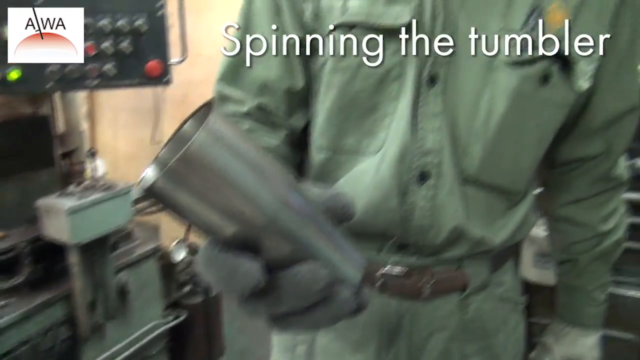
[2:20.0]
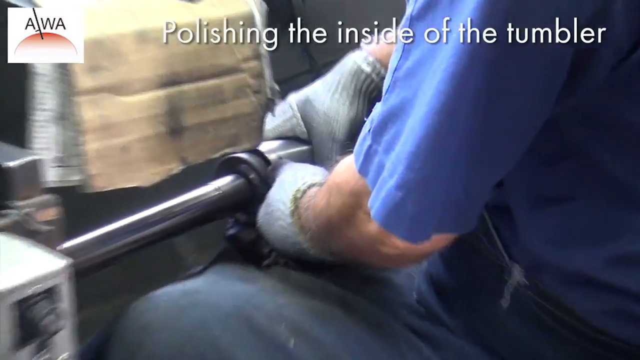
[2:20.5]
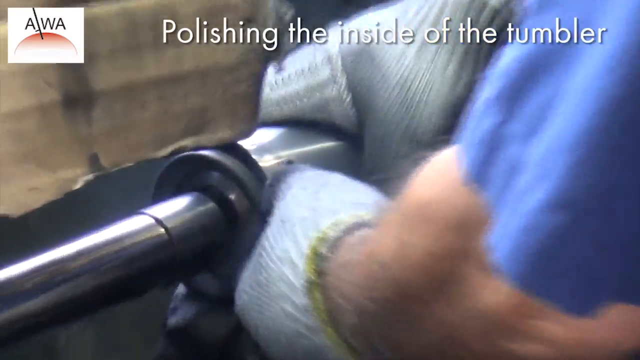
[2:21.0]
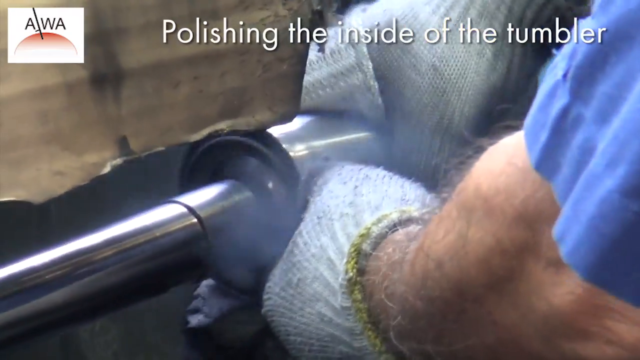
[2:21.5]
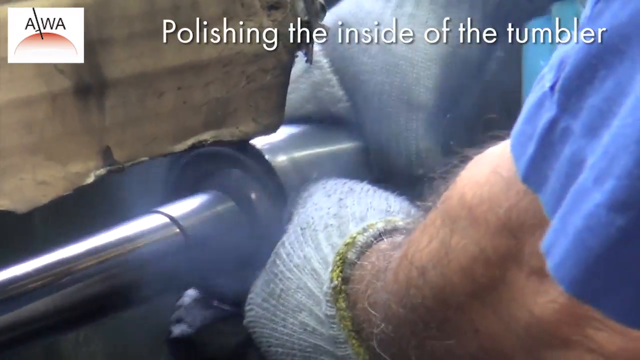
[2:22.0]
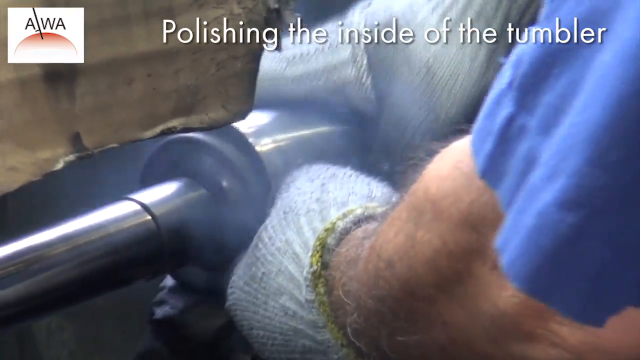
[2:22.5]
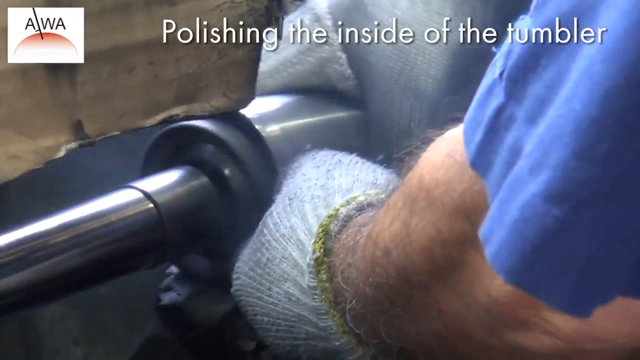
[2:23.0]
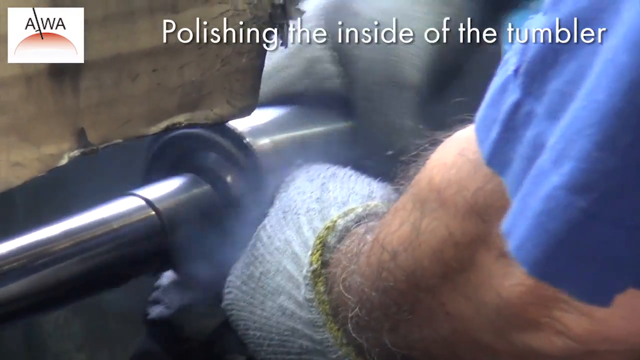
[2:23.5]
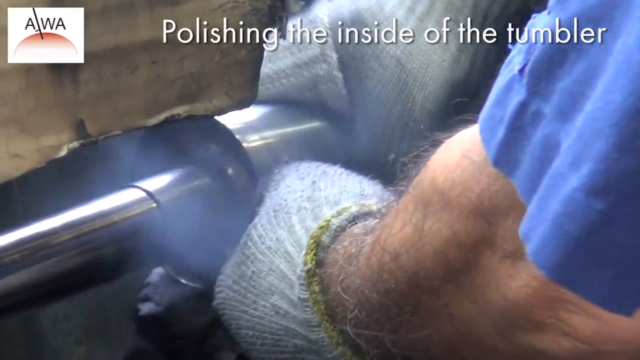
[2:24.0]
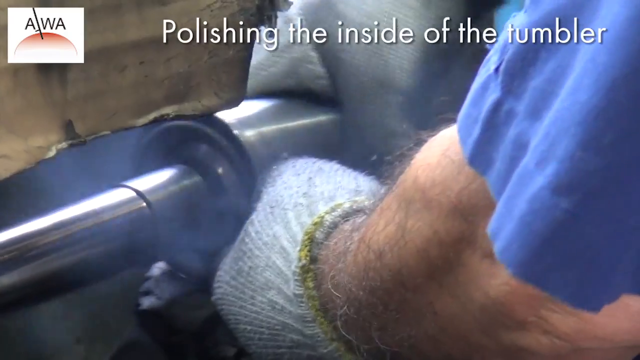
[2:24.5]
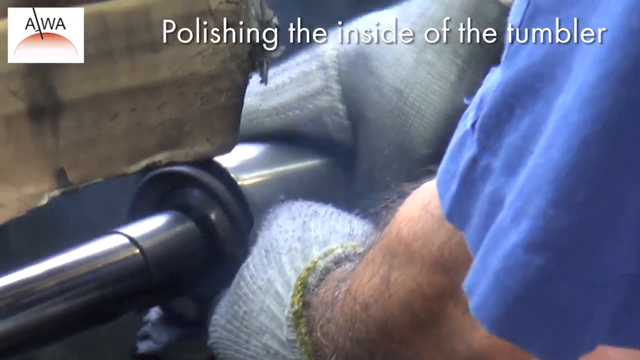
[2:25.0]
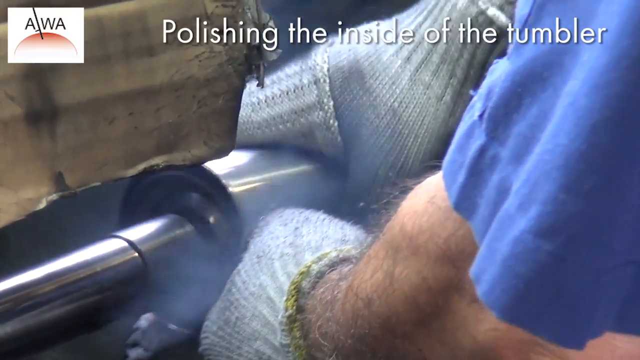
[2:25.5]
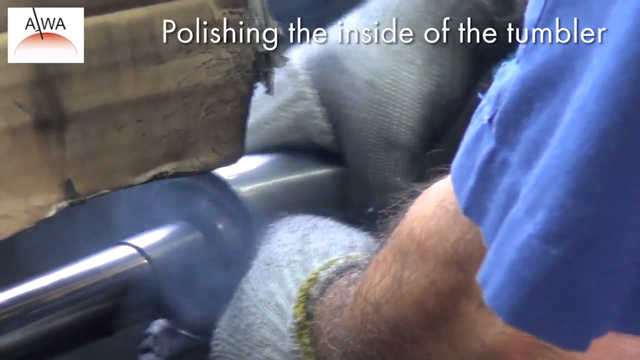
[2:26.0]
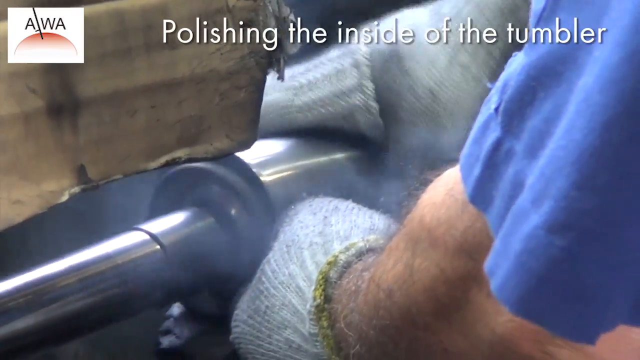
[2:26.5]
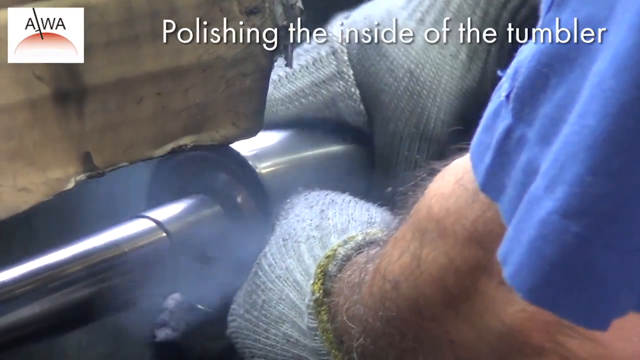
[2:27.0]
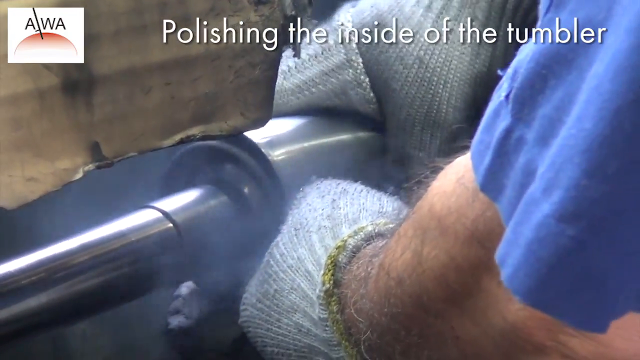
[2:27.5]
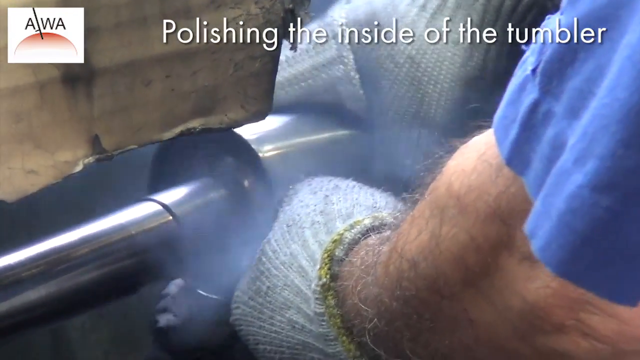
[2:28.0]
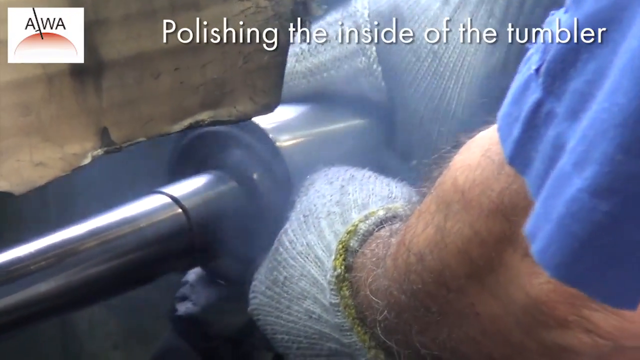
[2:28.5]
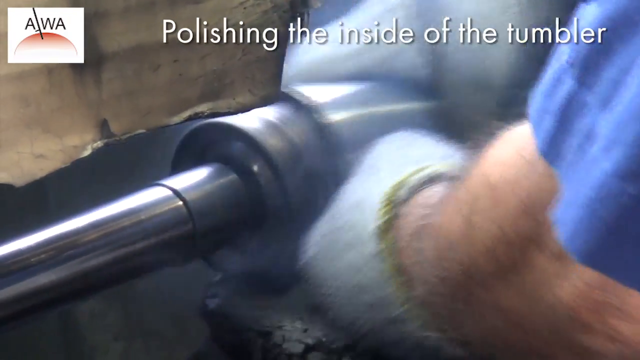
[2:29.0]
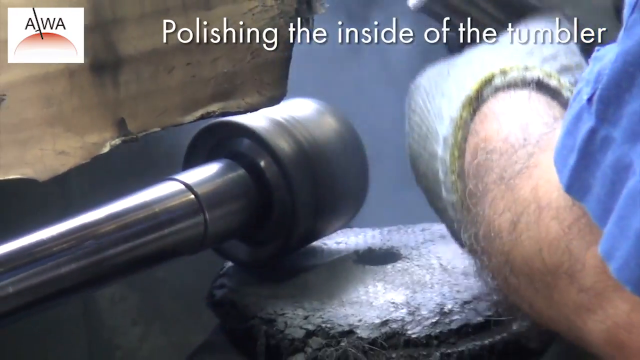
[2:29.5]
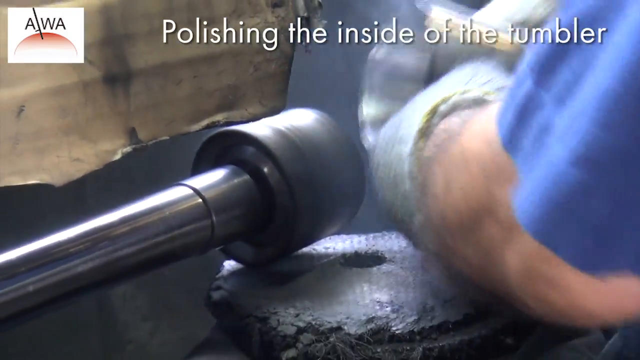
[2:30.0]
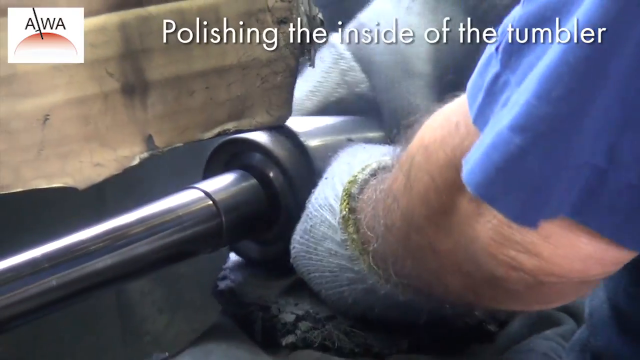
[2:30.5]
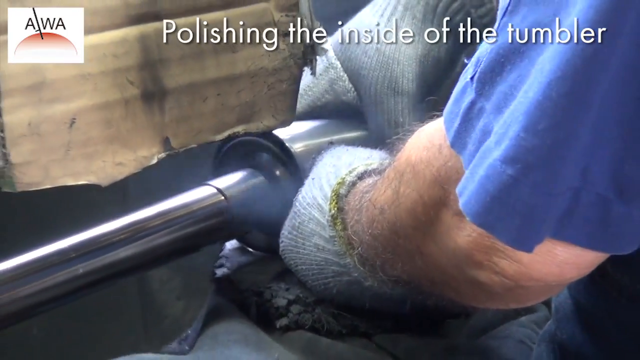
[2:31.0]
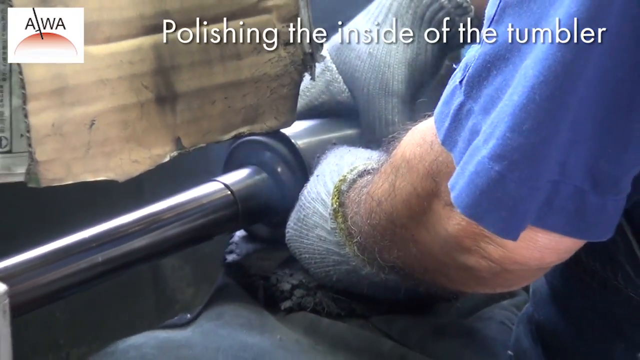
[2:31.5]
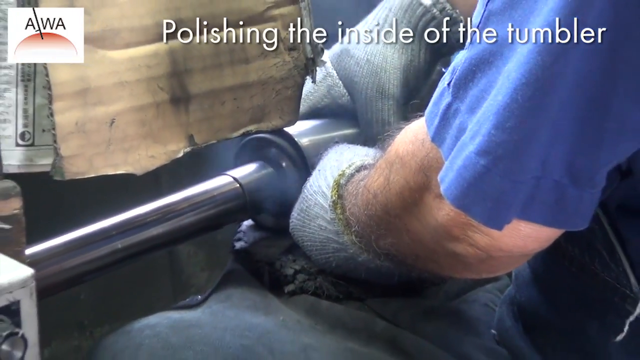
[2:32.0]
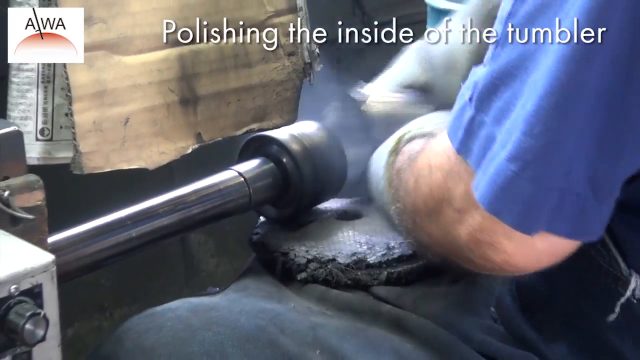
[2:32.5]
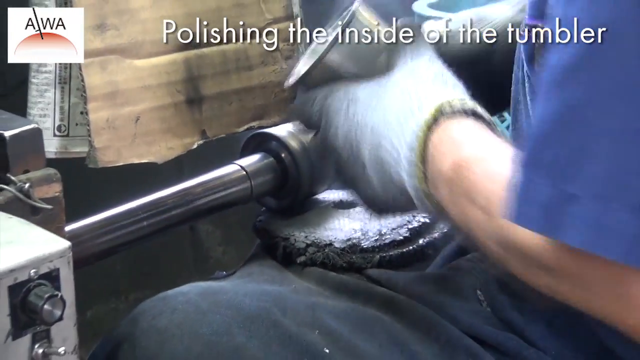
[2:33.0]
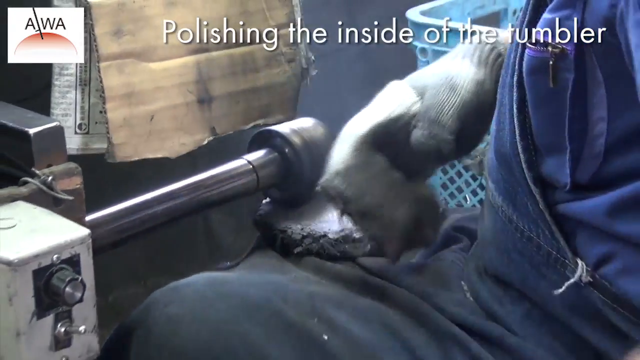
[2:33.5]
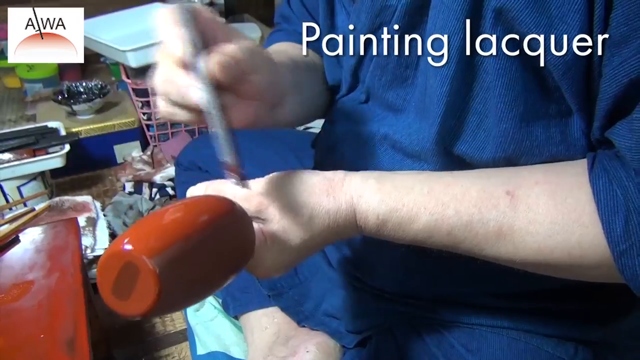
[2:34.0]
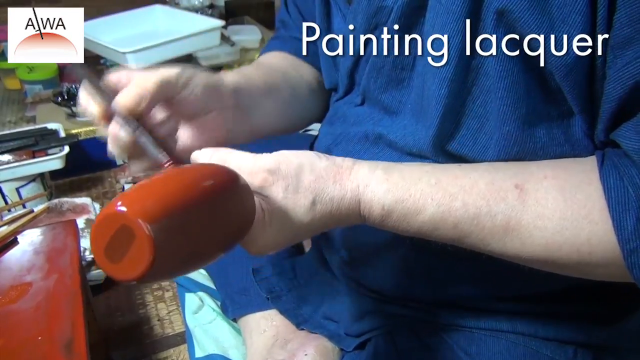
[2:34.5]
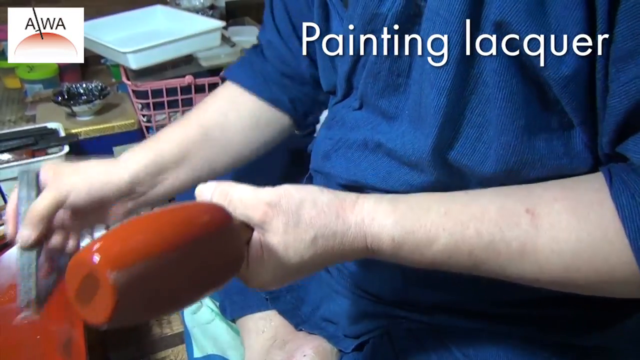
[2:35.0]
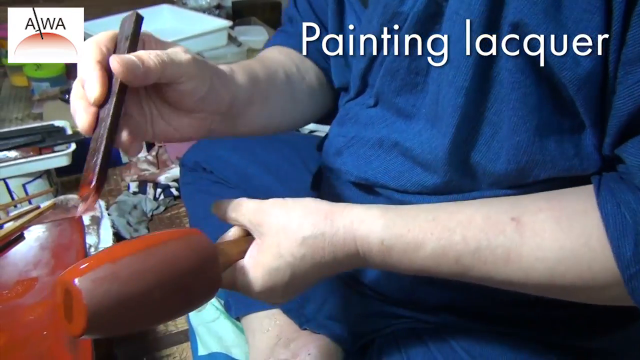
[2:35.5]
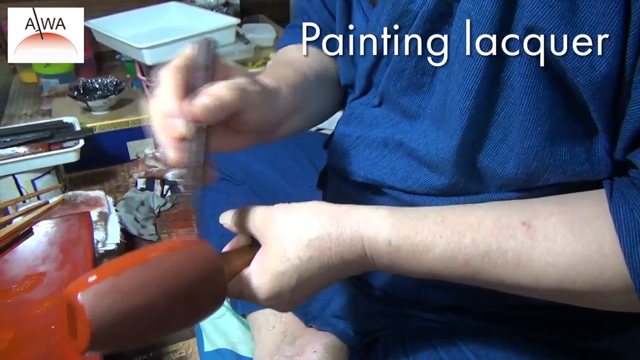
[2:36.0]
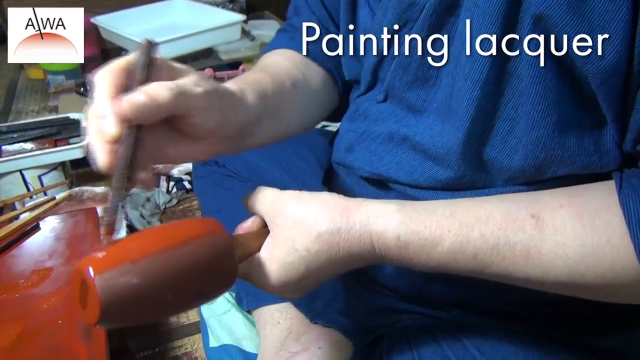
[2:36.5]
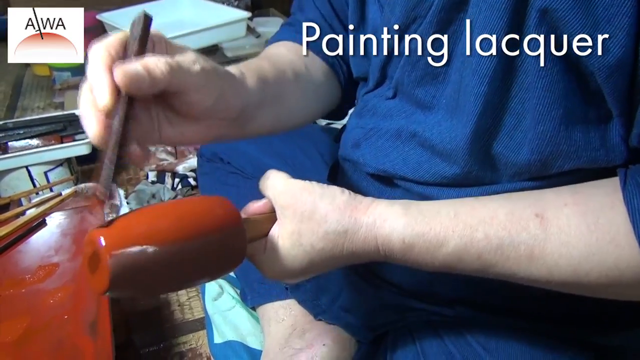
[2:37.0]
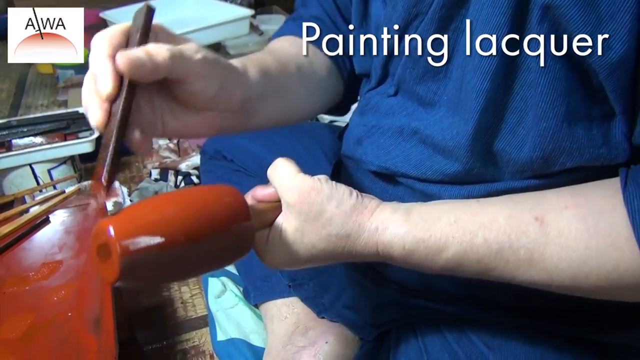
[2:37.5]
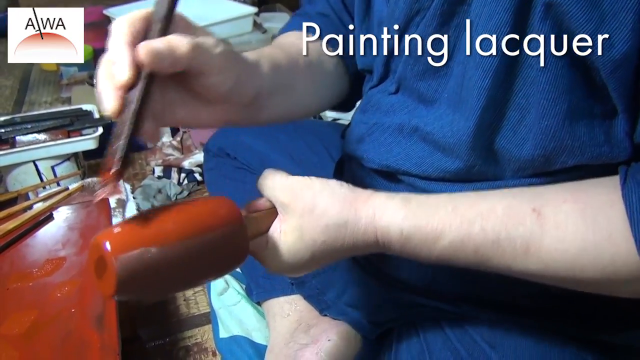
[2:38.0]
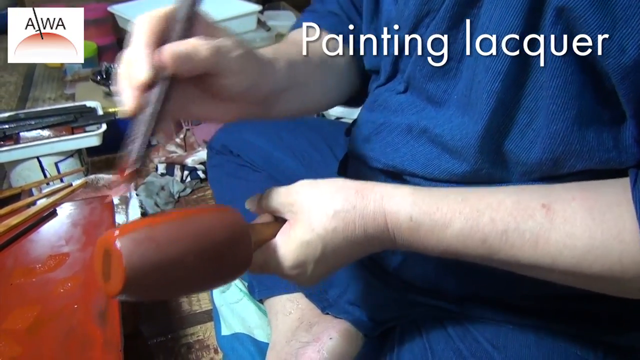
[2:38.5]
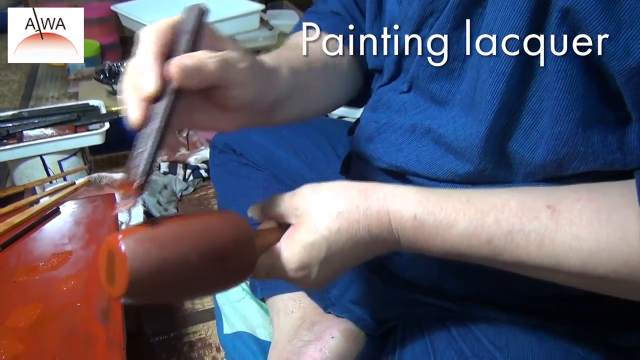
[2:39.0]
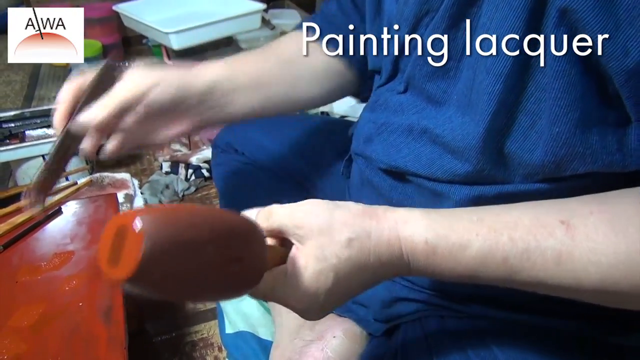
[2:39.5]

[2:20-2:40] The text "polishing the inside of the tumbler" appears in white in the top right corner of the screen. A man holds a tumbler and presses it against some kind of metal tool, like a round knob, apparently polishing the inside of the tumbler, moving it back and forth while steam pours from it. He wears blue short sleeves and rough gray gloves with yellow seams, and holds some kind of knob or mat on his knee. Next, probably a different person paints the tumbler a dark red, rusty color; this person also wears blue, and it is hard to tell whether it is the same person because the faces are not visible. The painter appears to be sitting cross-legged on the floor. The text "painting lacquer" appears in white letters in the top right corner. In the top left corner is a white rectangle with the text "AWA" in black, all caps, and a logo of a red semicircle with a black stem attached to it. The man painting wears short sleeves, and there are lots of baskets and other things behind him; the space is kind of messy, and the paint is very shiny.